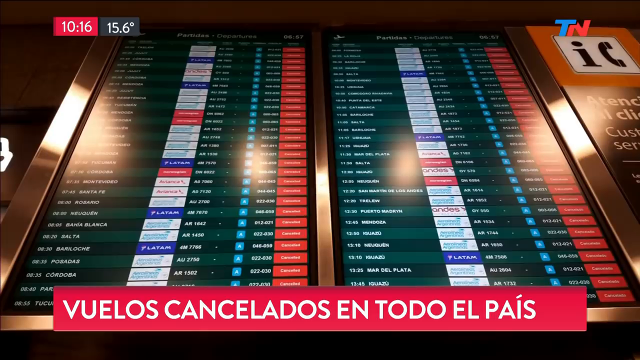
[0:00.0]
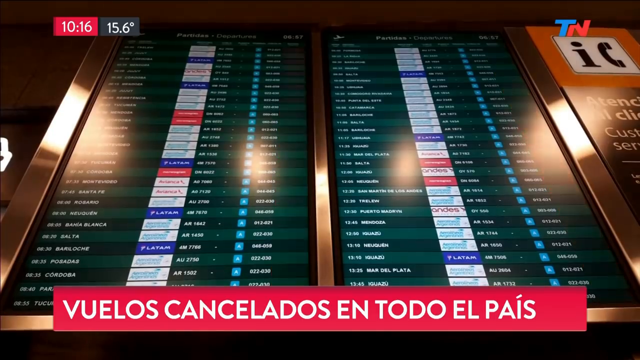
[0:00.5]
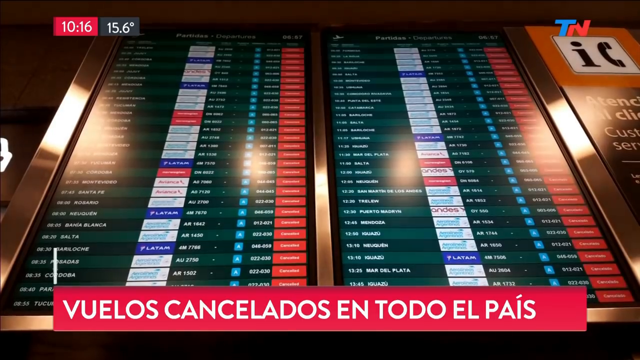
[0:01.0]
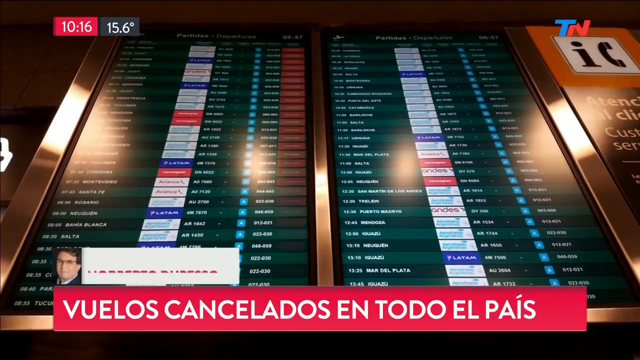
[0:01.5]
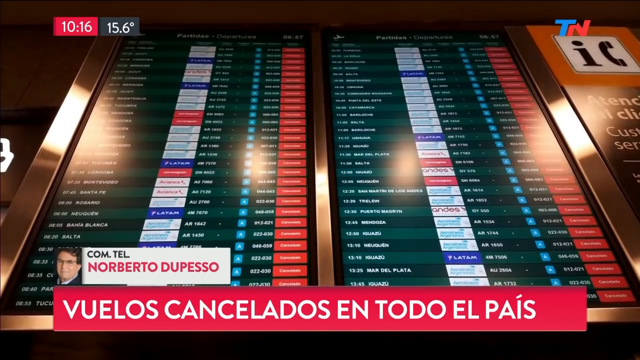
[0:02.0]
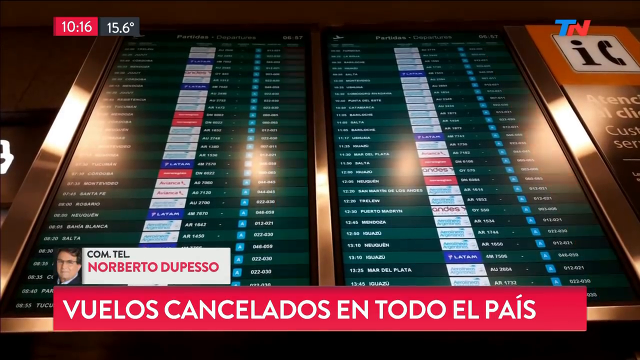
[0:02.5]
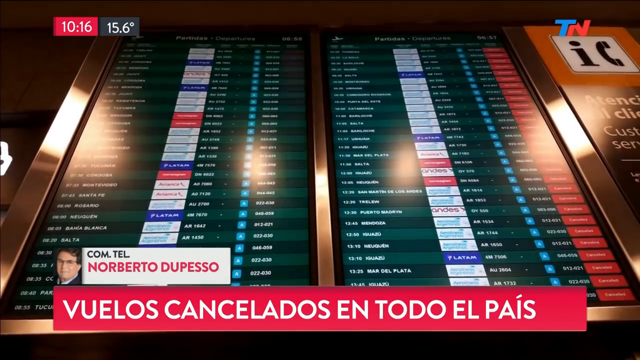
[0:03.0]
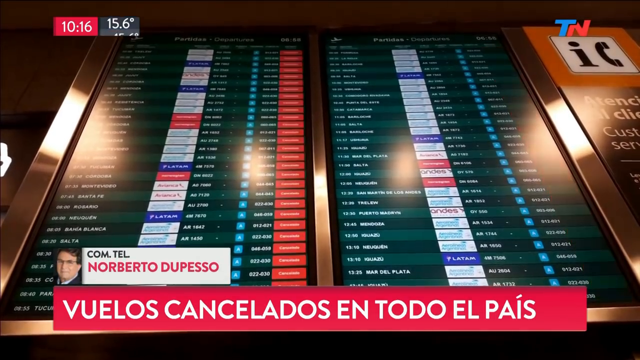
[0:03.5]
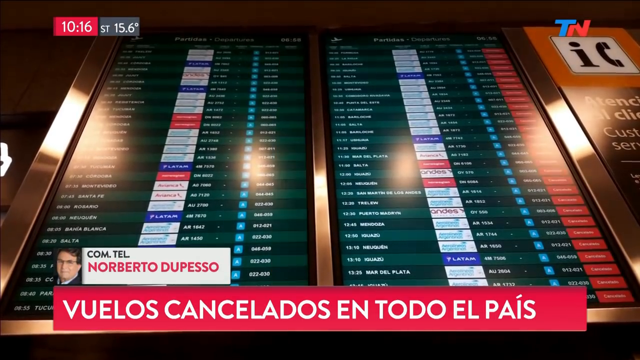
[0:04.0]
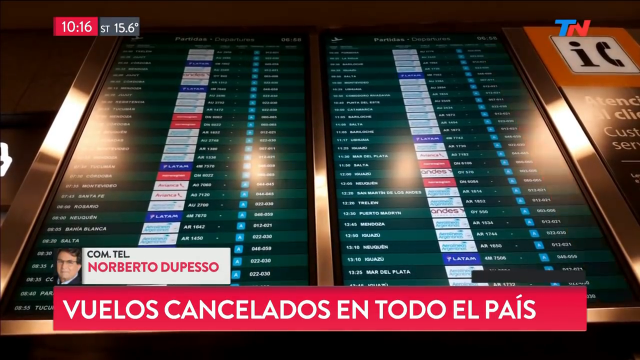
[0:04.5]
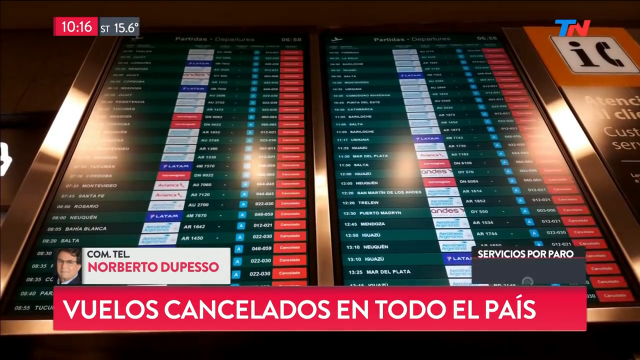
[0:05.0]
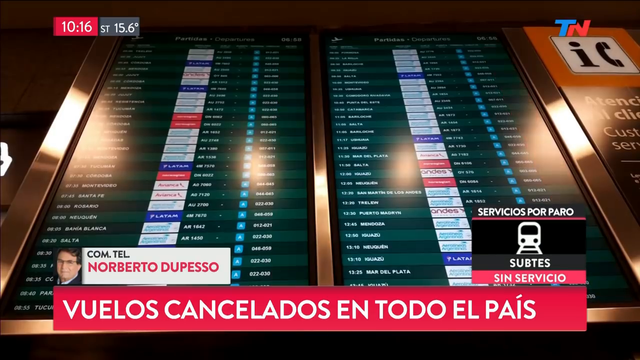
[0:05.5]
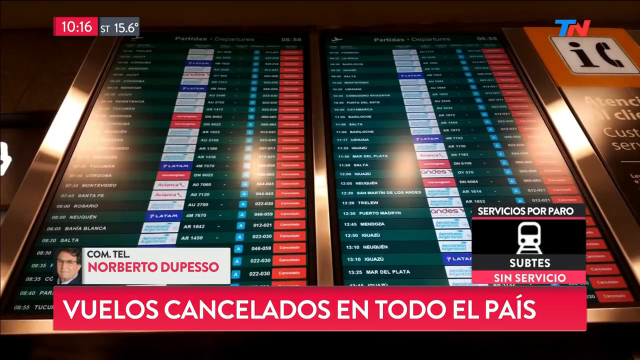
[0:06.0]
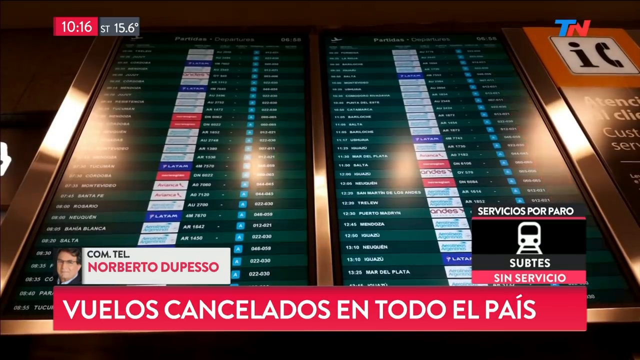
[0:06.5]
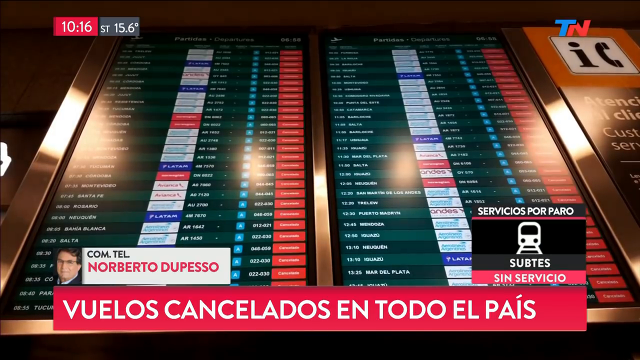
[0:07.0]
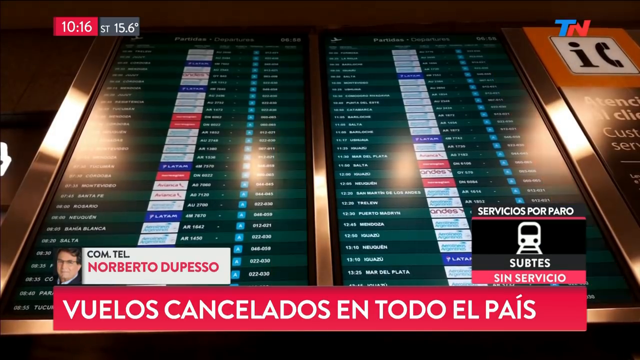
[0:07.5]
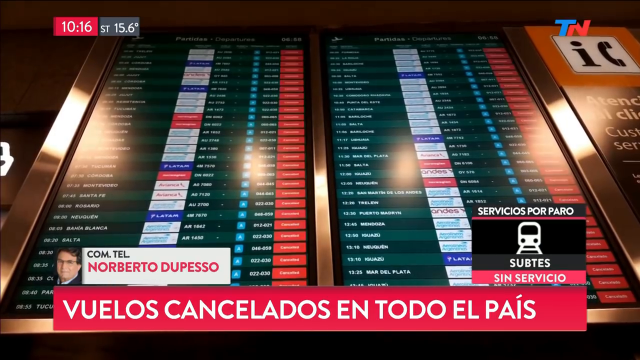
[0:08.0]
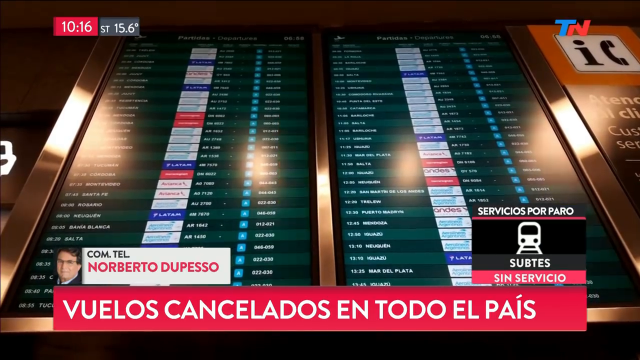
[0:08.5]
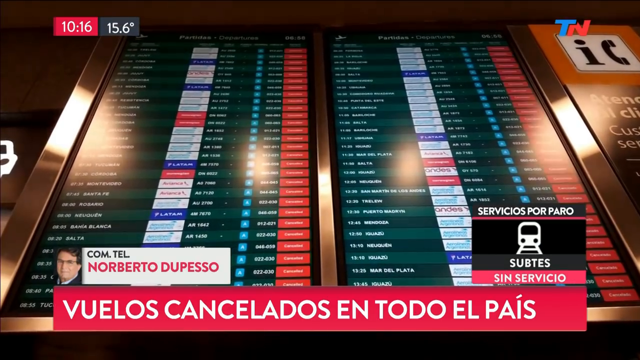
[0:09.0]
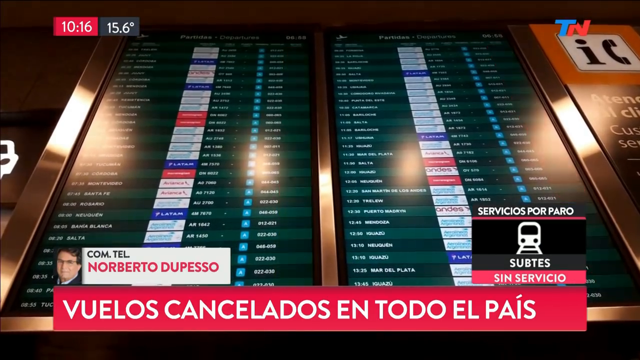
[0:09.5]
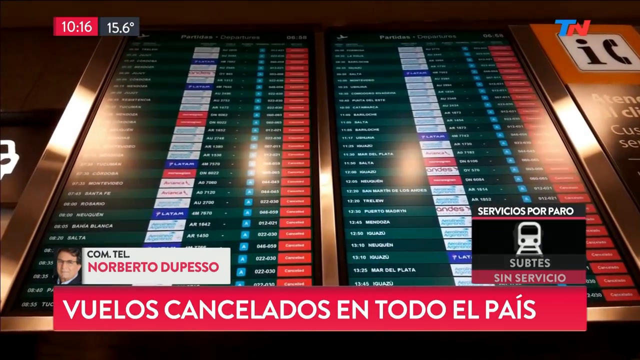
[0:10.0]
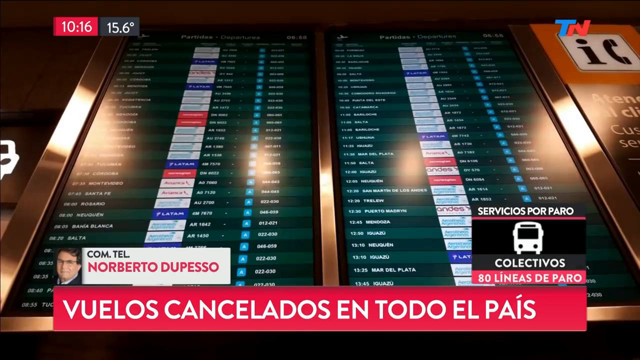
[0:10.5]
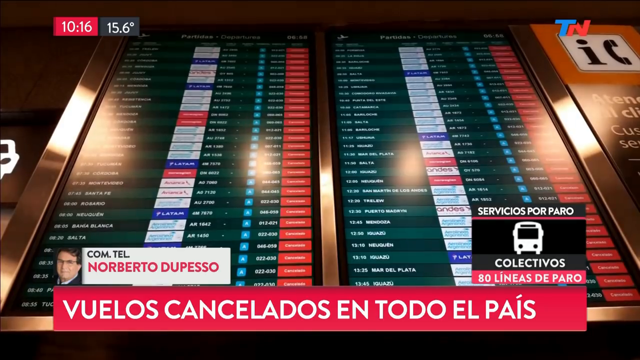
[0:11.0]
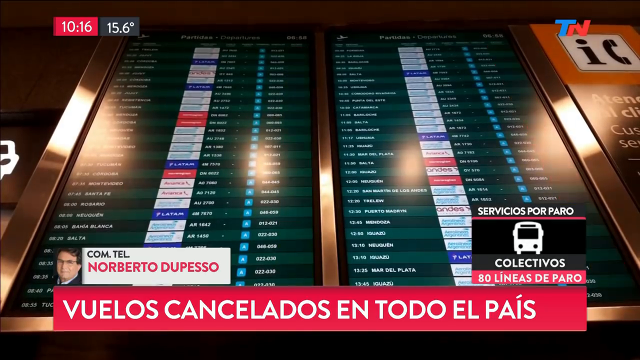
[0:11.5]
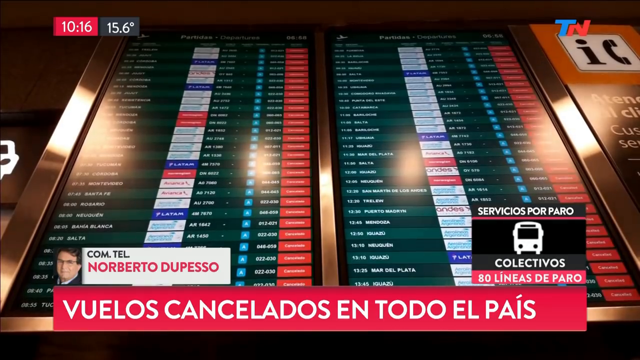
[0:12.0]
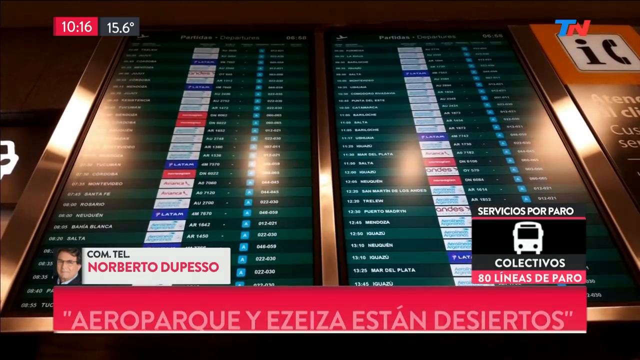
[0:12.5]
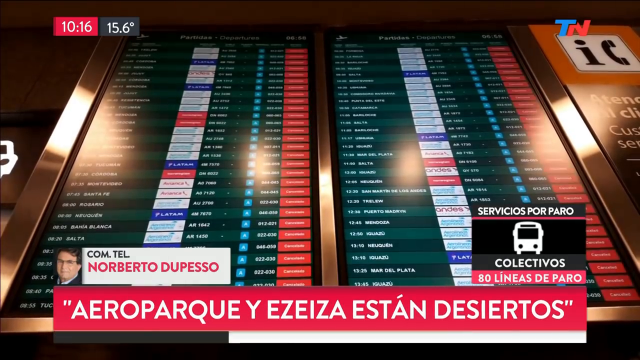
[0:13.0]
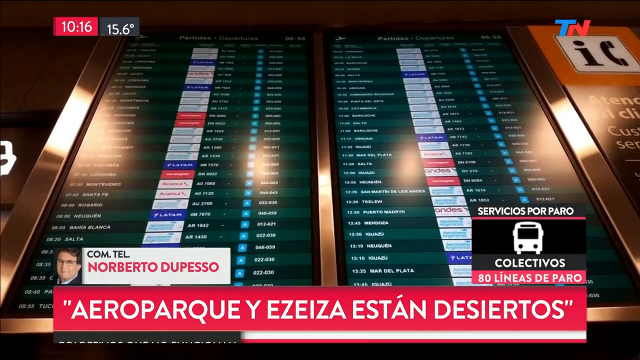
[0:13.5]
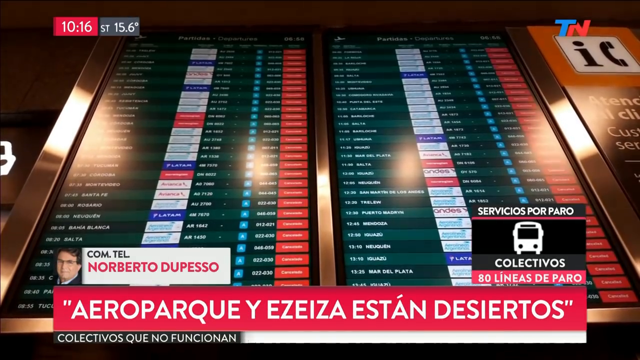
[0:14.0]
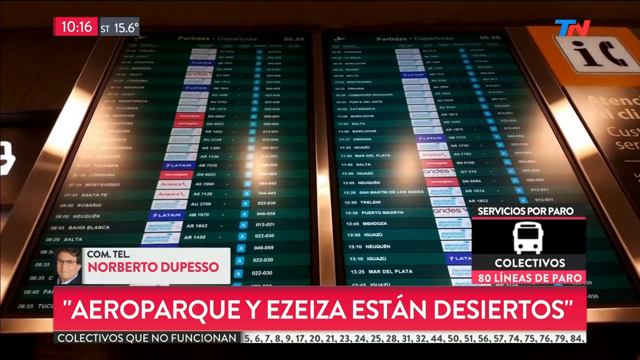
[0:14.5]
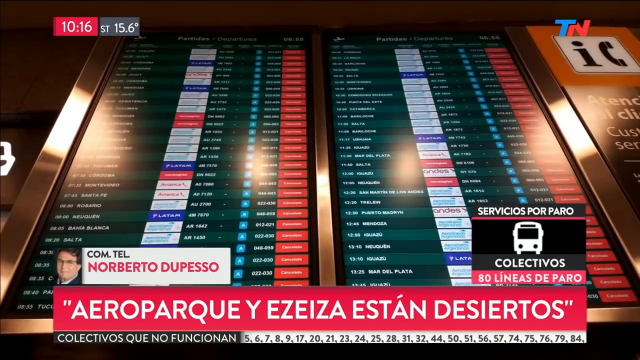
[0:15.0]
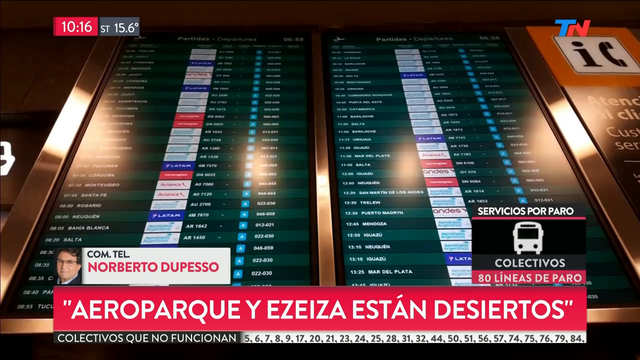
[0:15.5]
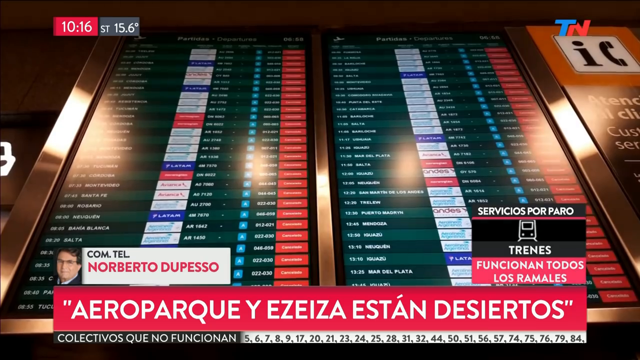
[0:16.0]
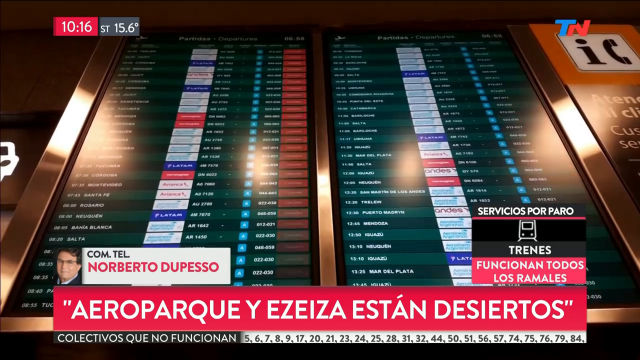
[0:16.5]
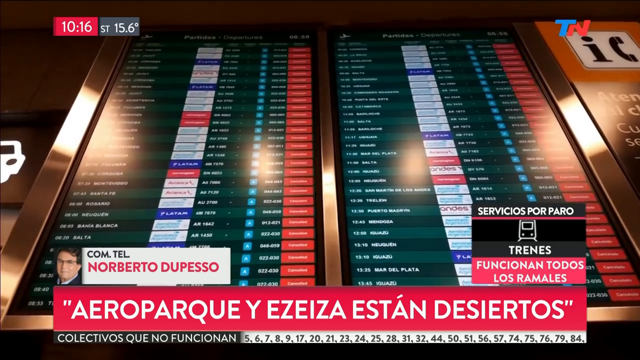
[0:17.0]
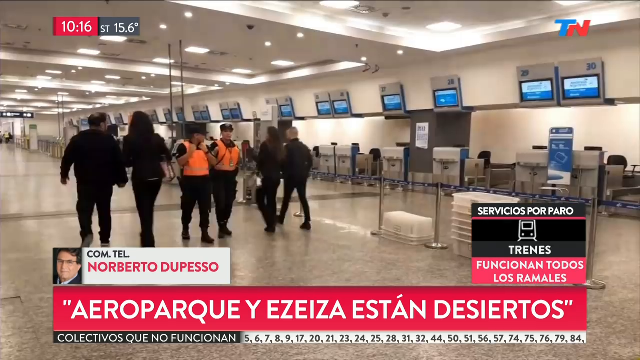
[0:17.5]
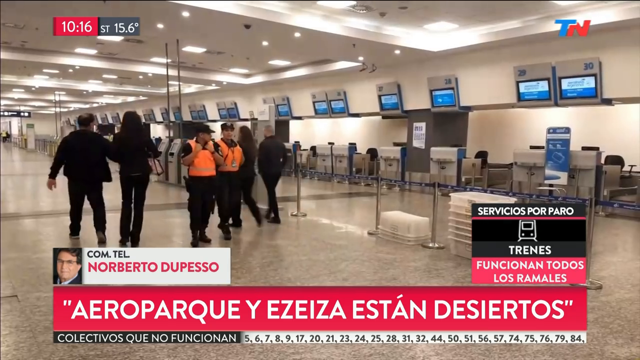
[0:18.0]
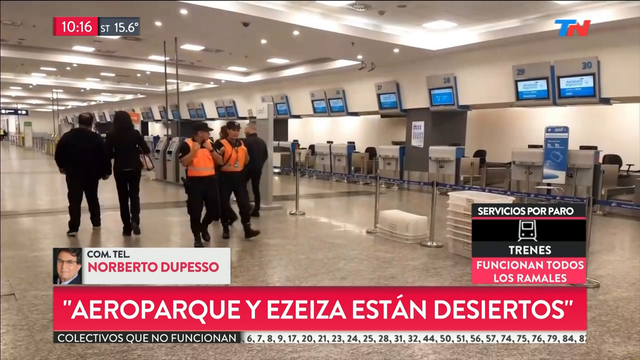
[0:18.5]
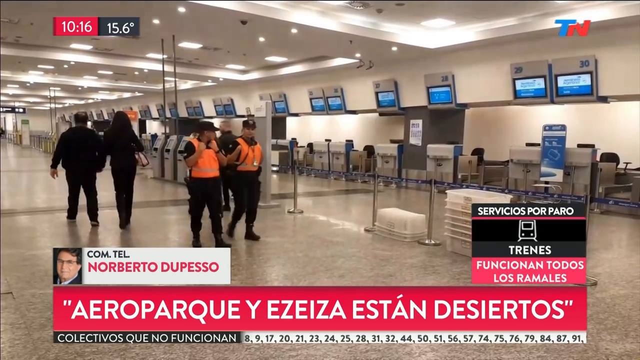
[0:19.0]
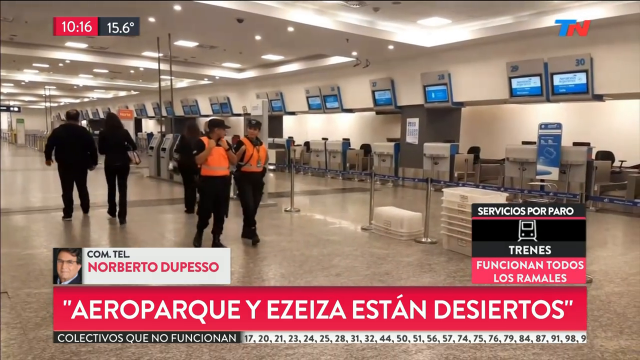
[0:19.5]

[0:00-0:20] The video opens on a rail station, where two big screens at the entrance show different departure and arrival times along with travel destinations. The view shifts to the other side of the station, where two trains are visible. Many screens are attached to the wall, apparently indicating destinations for passengers, and people walk through the area. The station is large, with many screens, stands and corridors.